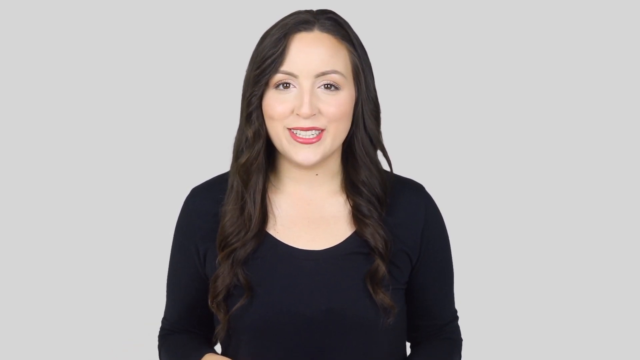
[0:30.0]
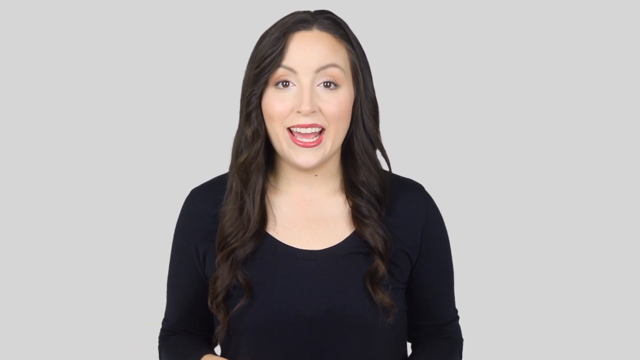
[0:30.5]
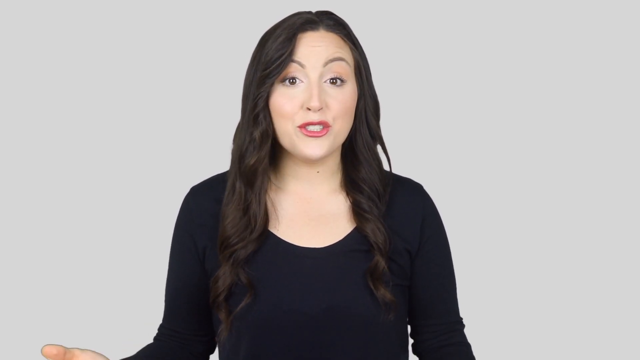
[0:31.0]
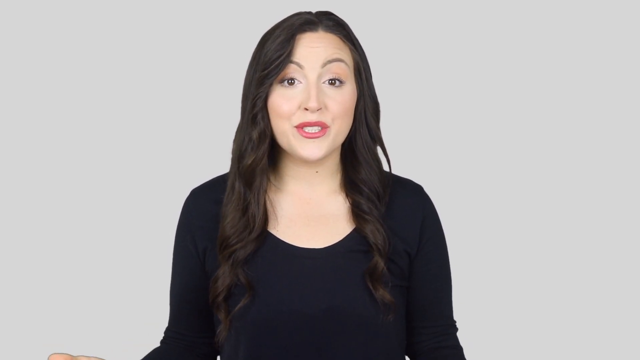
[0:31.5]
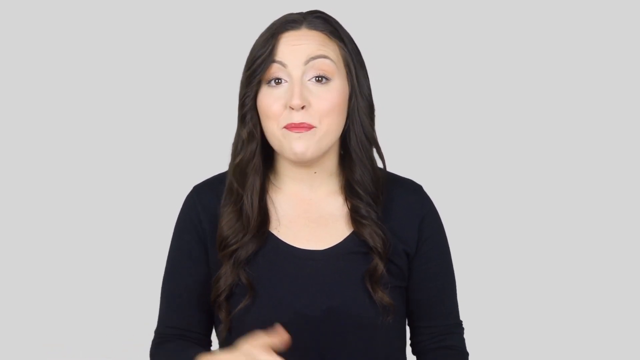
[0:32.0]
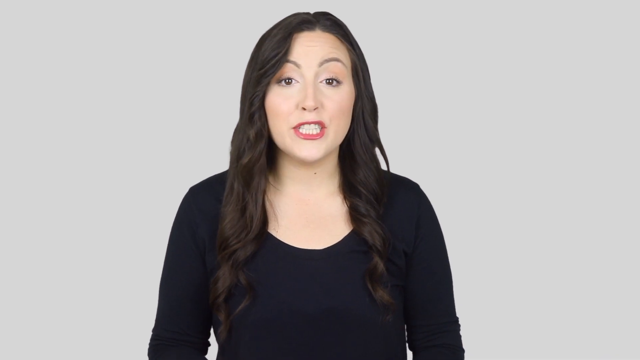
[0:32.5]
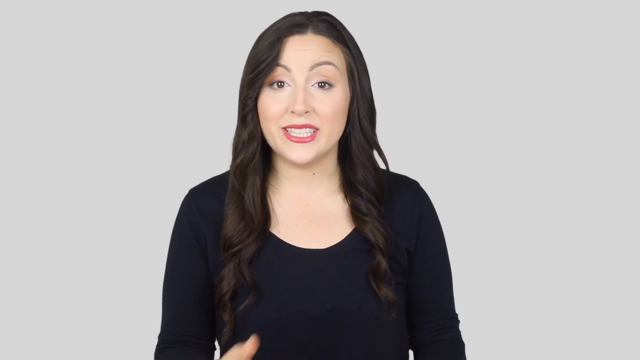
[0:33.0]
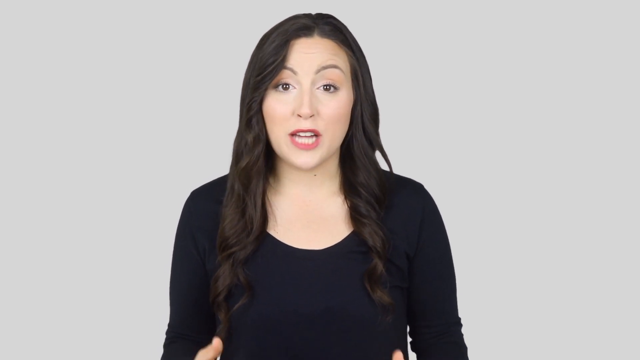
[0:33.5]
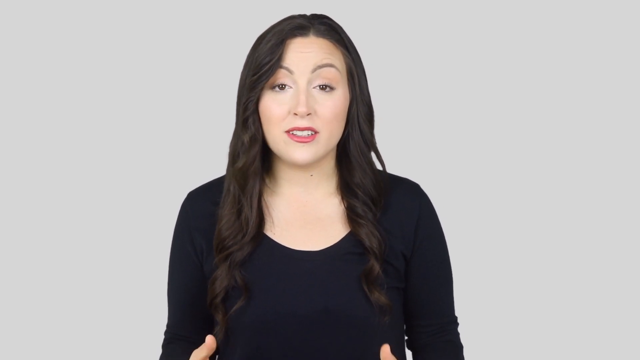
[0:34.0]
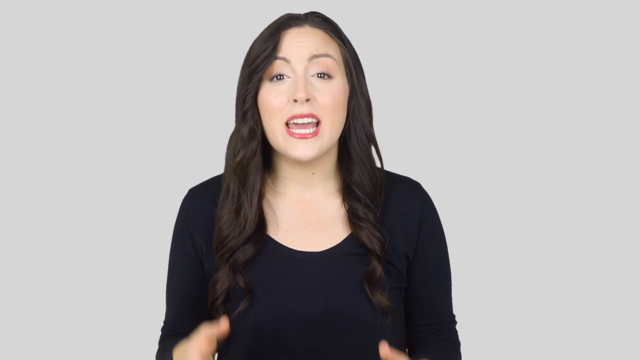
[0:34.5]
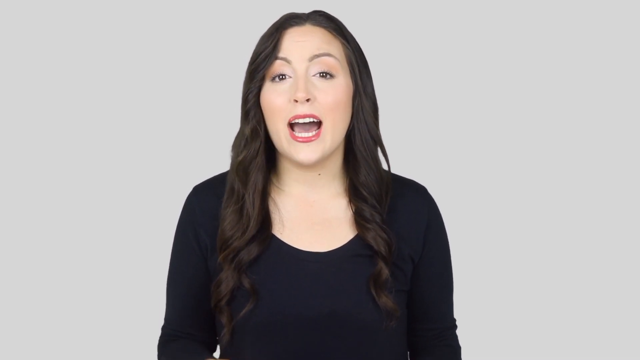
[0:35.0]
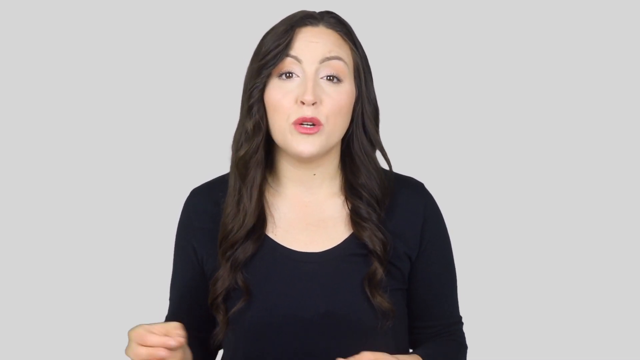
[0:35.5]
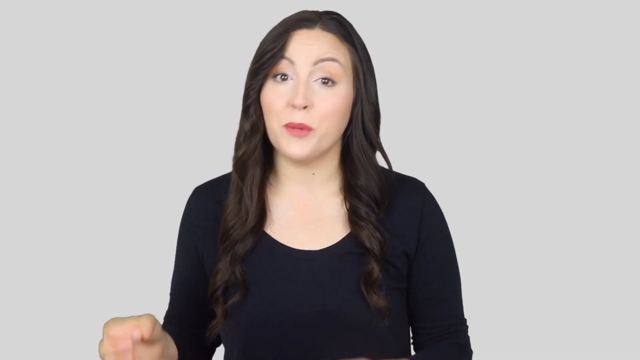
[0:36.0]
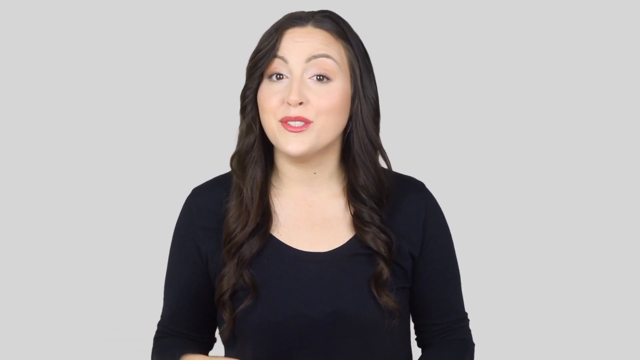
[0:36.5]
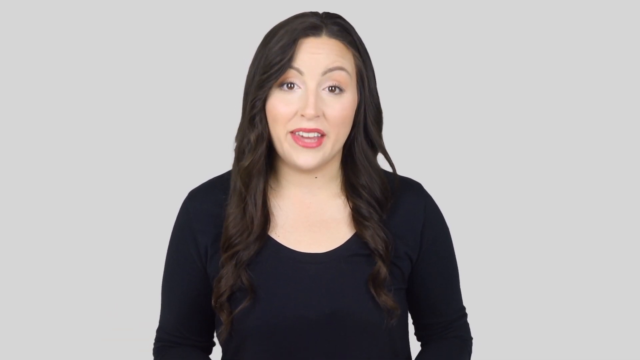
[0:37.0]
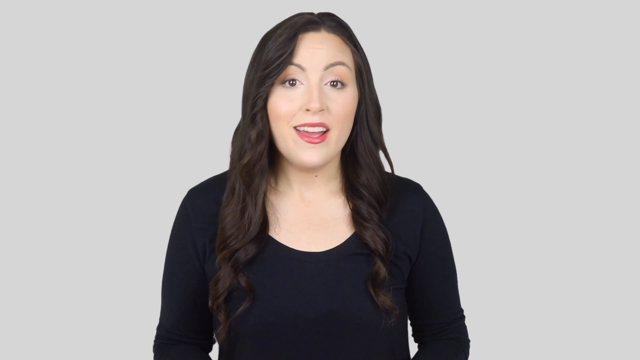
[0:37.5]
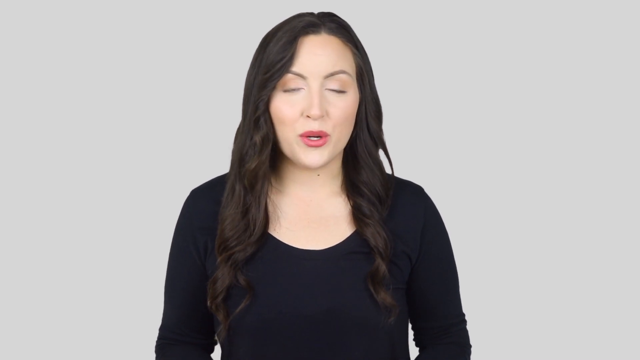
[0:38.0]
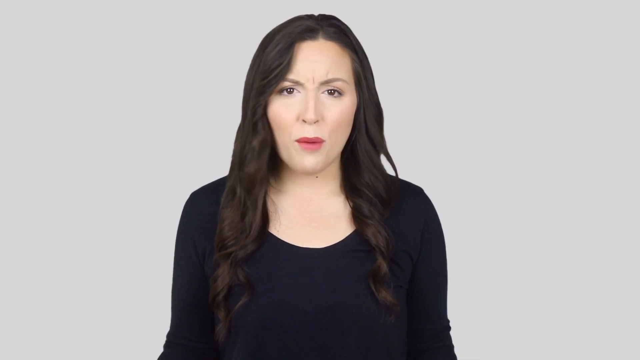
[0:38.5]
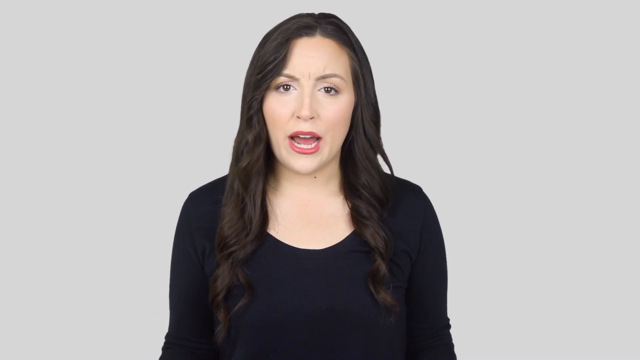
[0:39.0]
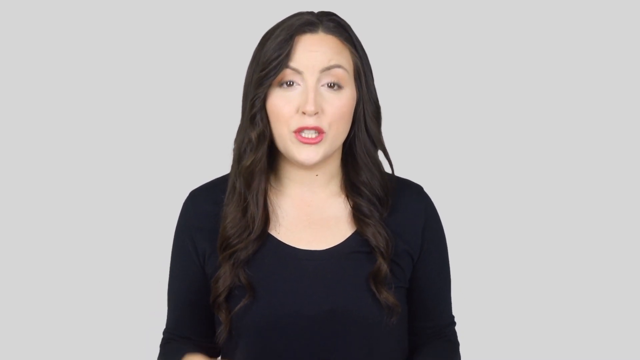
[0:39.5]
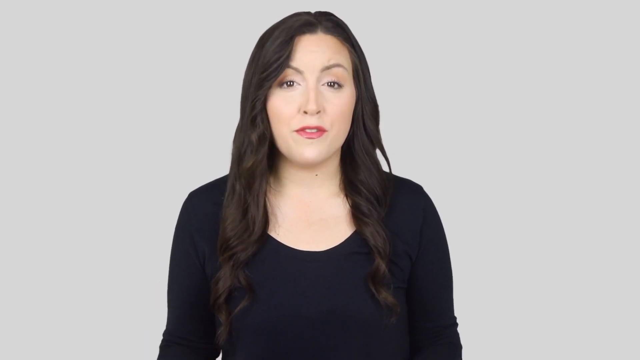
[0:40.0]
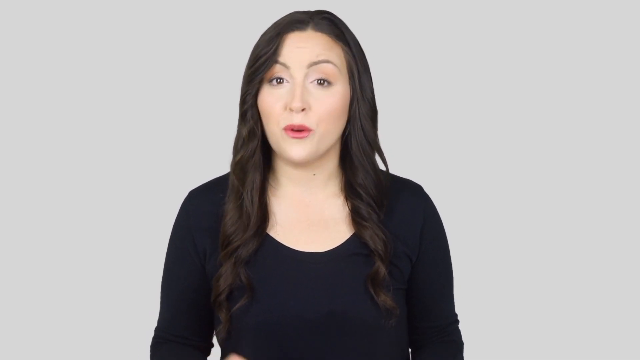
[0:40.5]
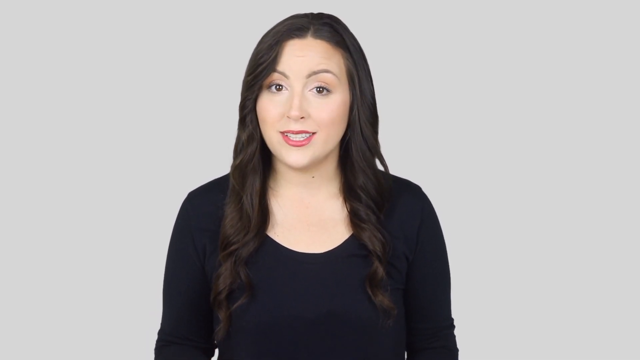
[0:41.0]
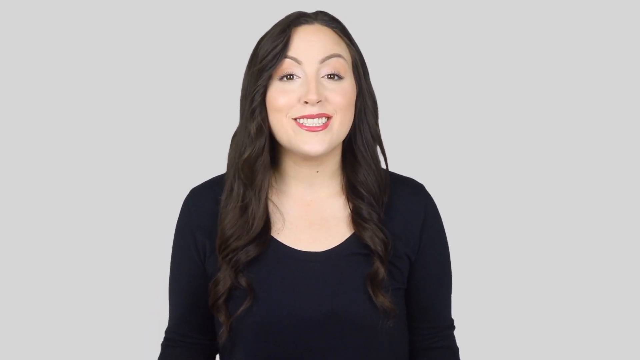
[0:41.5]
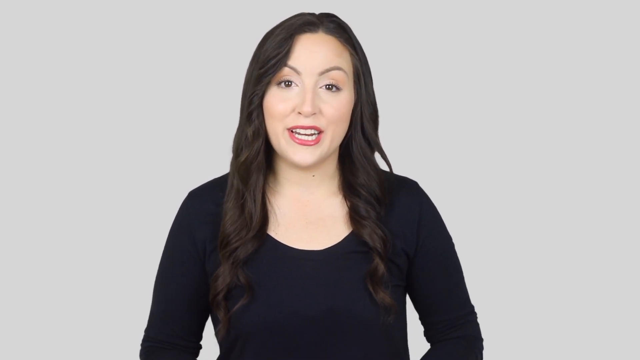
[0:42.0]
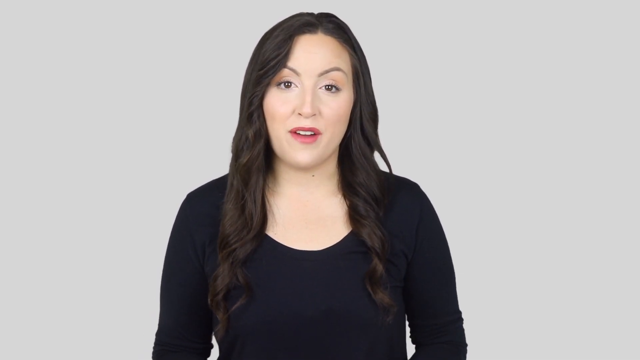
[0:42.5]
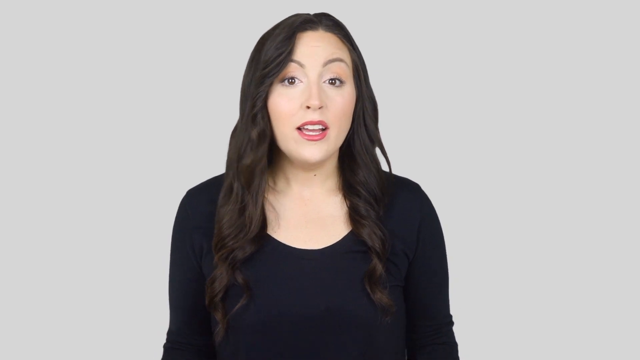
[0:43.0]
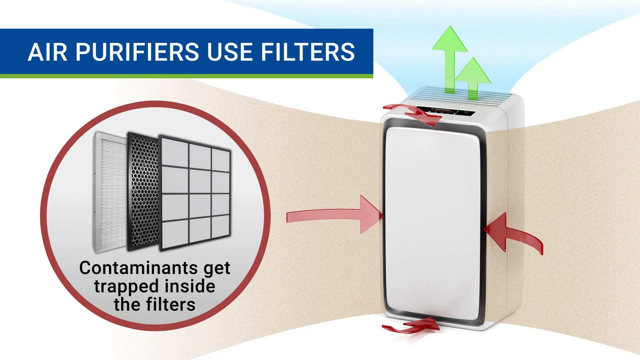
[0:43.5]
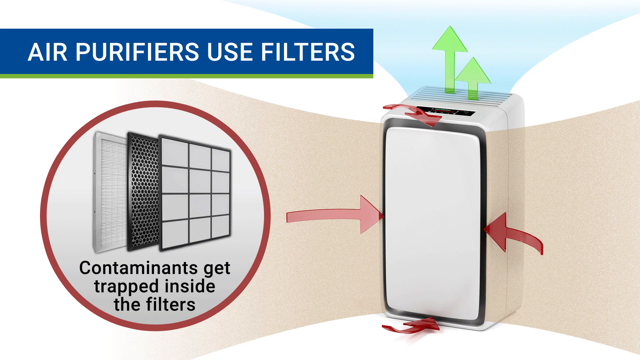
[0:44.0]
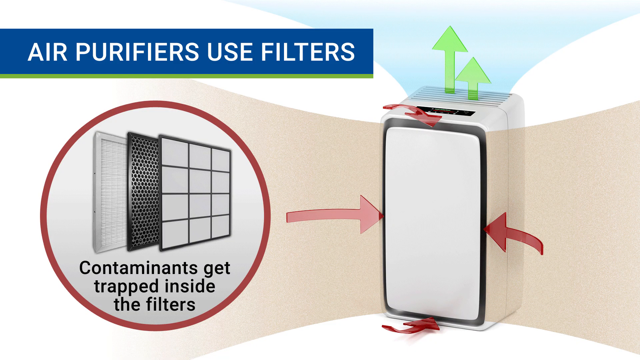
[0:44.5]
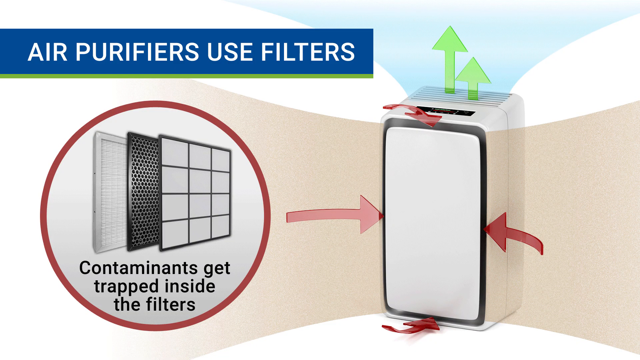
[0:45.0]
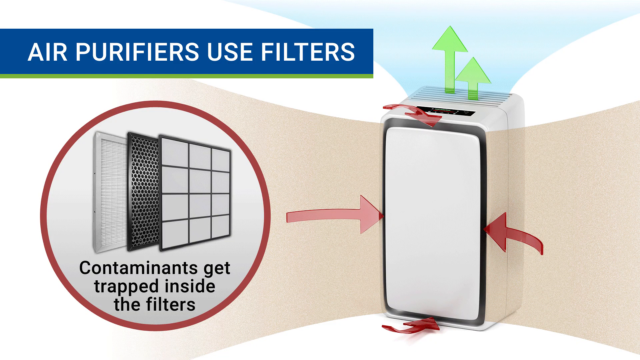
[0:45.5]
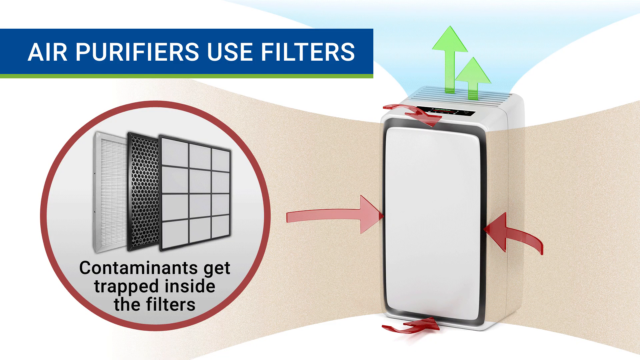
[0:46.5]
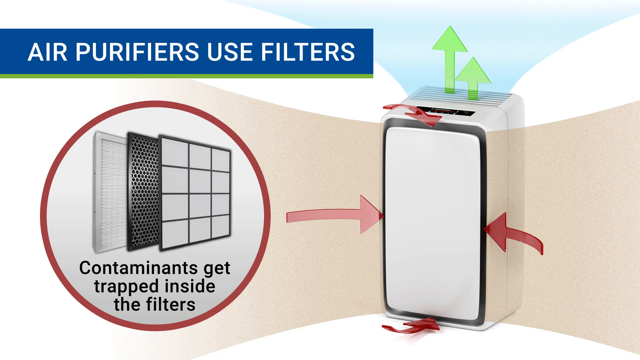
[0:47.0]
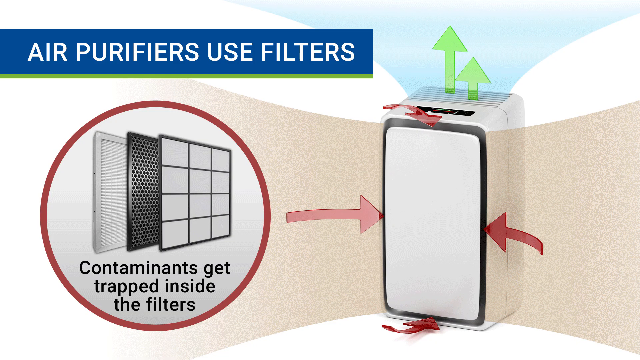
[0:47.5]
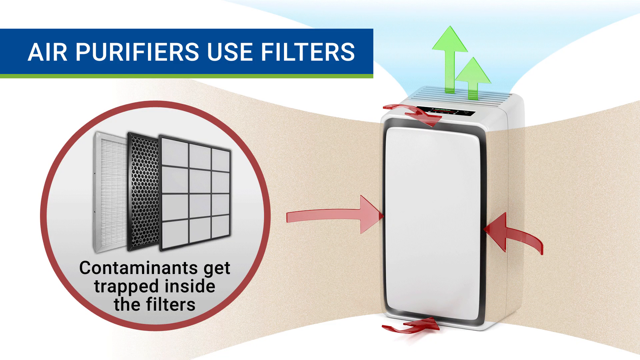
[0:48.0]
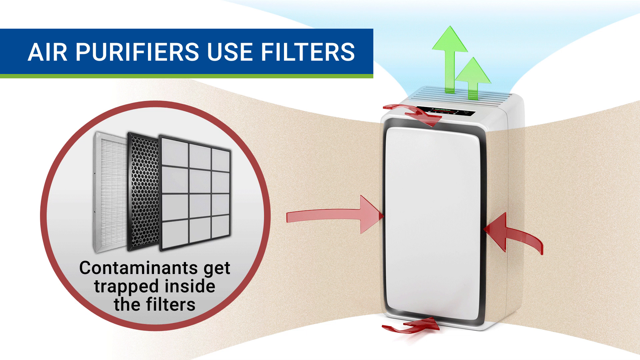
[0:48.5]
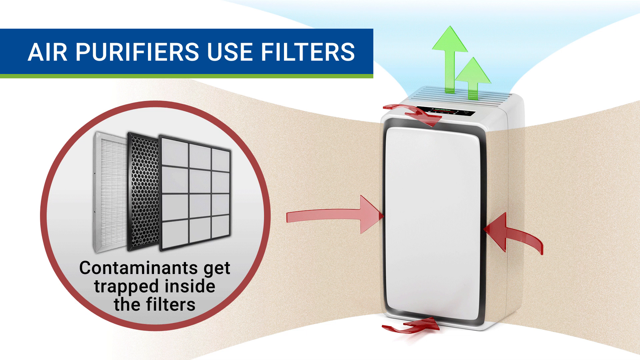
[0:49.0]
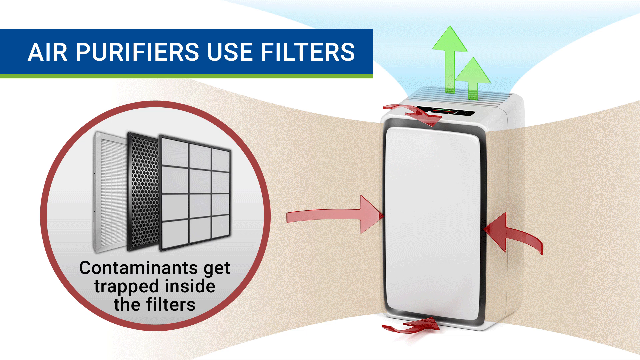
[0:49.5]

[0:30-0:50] A woman with long, dark brown hair curled at the ends talks to the camera in front of a plain, light grey background. She wears a long-sleeve black shirt and minimal makeup, just a slightly darker pink lipstick. She has large brown eyes and smiles as she speaks. The next screen shows an image of an air filter and an air purifier. Toward the top left corner is a blue heading box with white text reading "air purifiers use filters". Below it is a white circle with a red outline containing three square-shaped filters: some have lines across them forming little squares, one is black with little holes all over it, and another looks kind of white. Inside the circle, beneath the filters, small black text reads "contaminants get trapped inside the filters". To the right is a tall, rectangular, white air filter with what look like vents at the top and two green arrows coming from it pointing up. Red arrows point to its front surface from the left and right sides as well as from above and below.